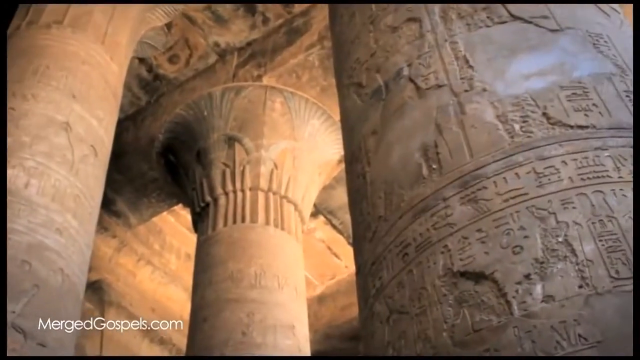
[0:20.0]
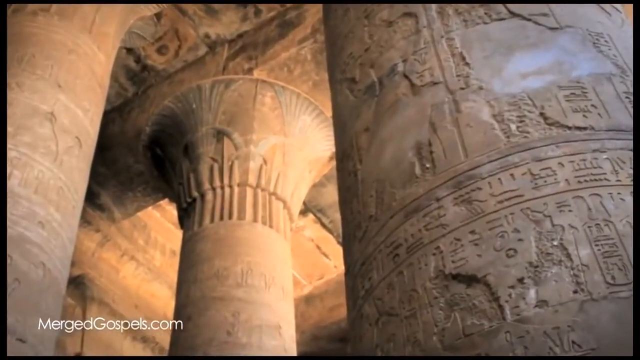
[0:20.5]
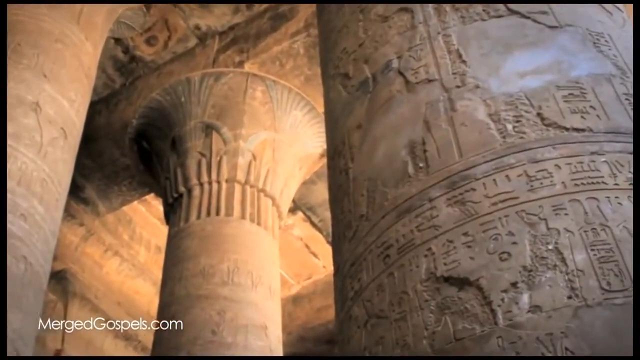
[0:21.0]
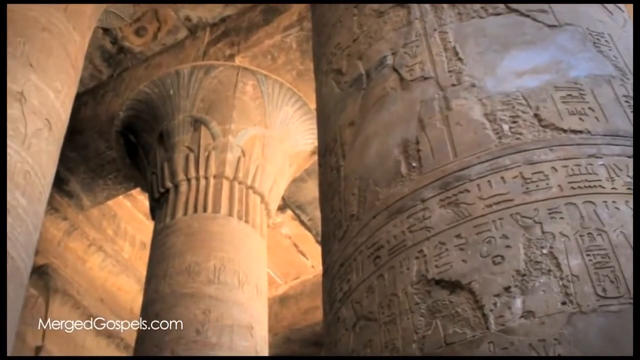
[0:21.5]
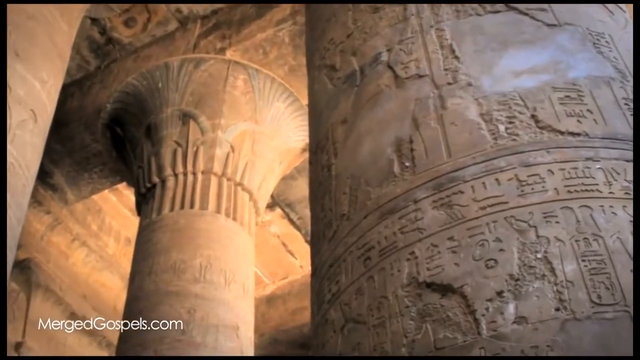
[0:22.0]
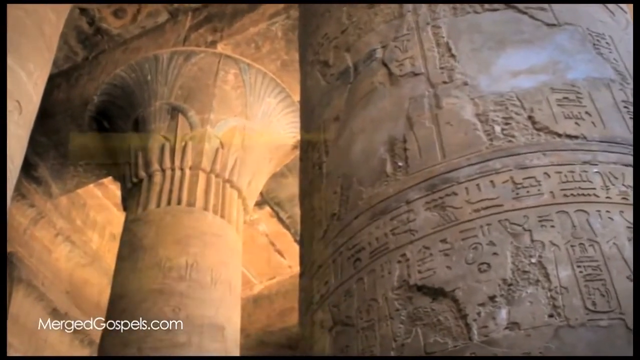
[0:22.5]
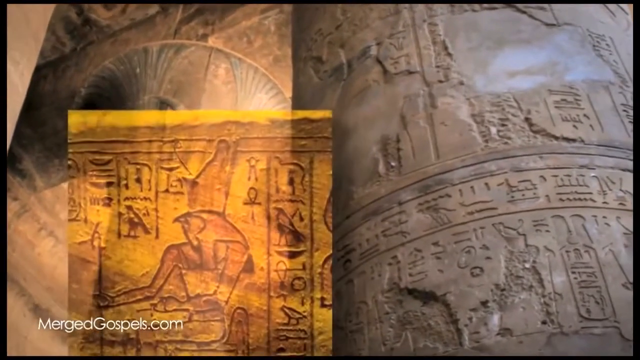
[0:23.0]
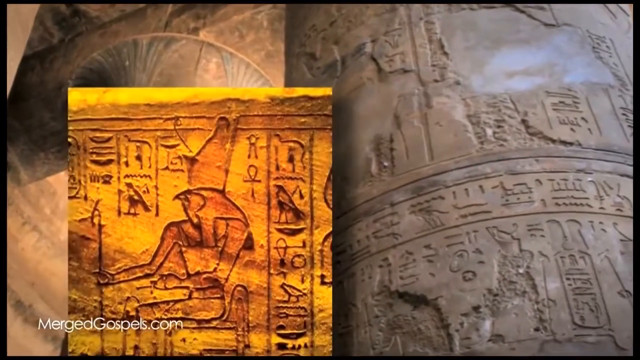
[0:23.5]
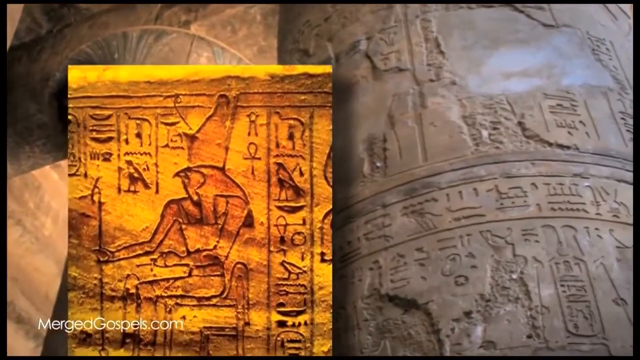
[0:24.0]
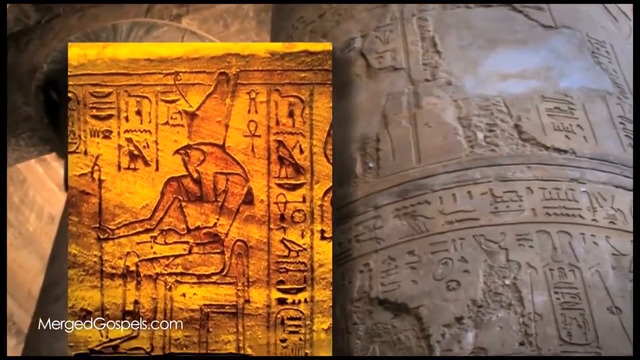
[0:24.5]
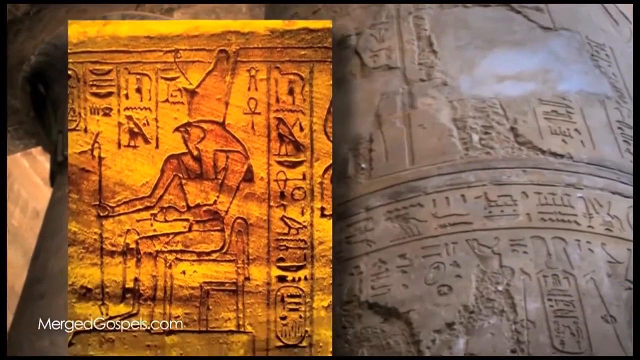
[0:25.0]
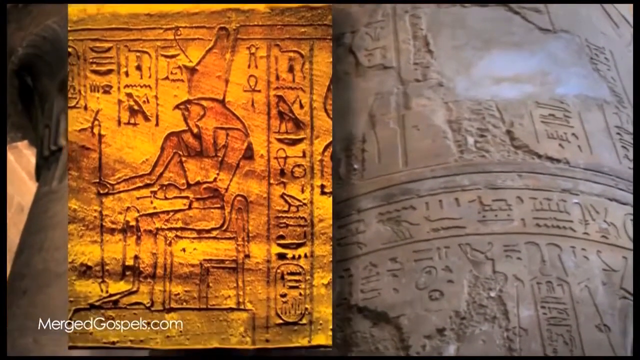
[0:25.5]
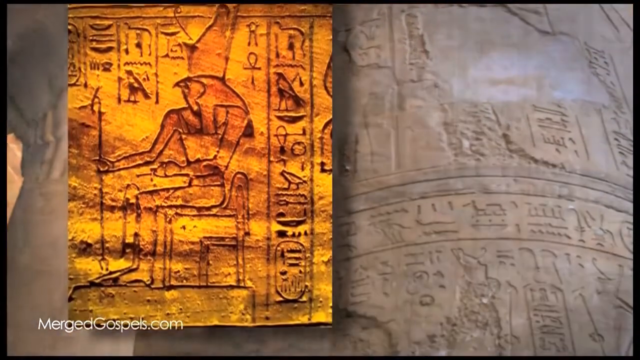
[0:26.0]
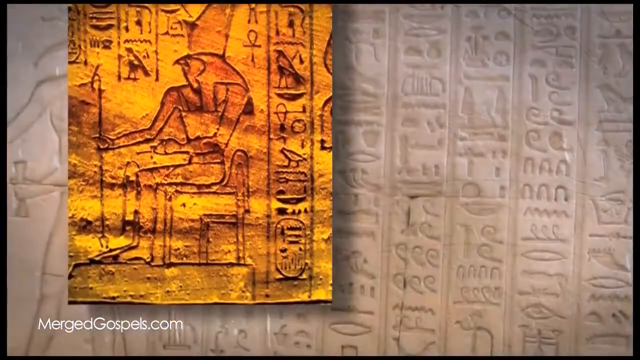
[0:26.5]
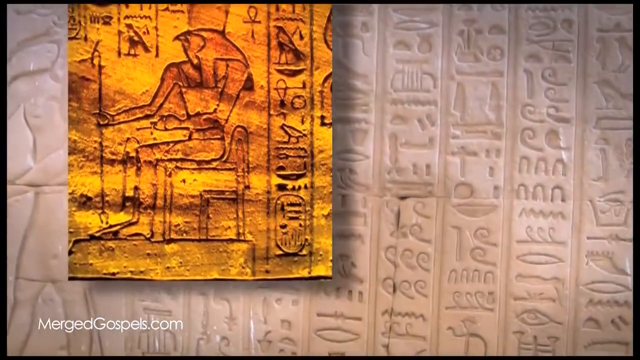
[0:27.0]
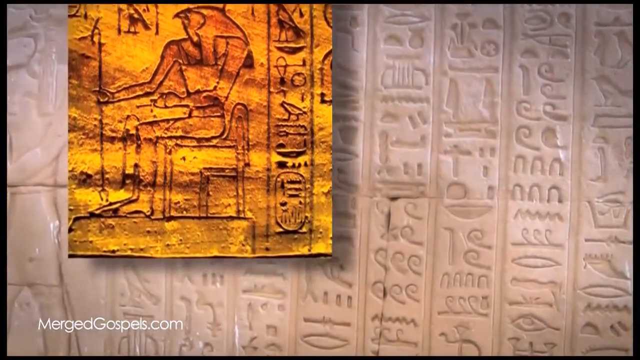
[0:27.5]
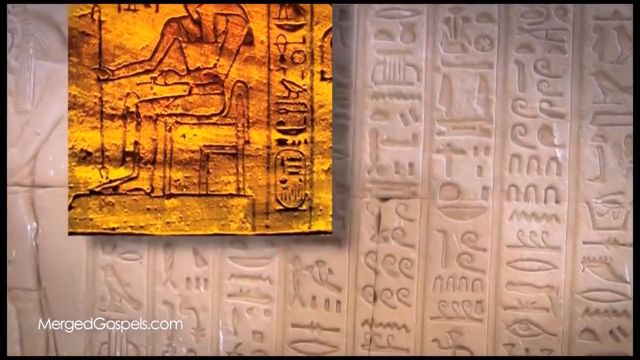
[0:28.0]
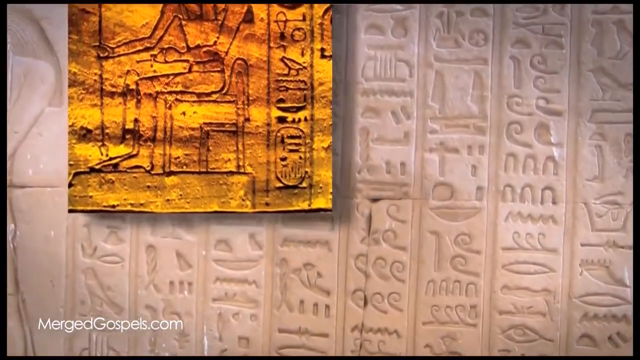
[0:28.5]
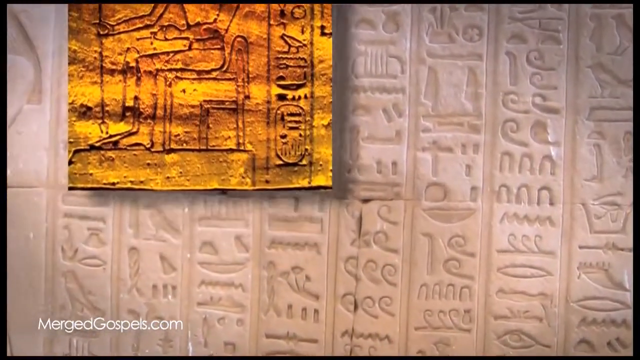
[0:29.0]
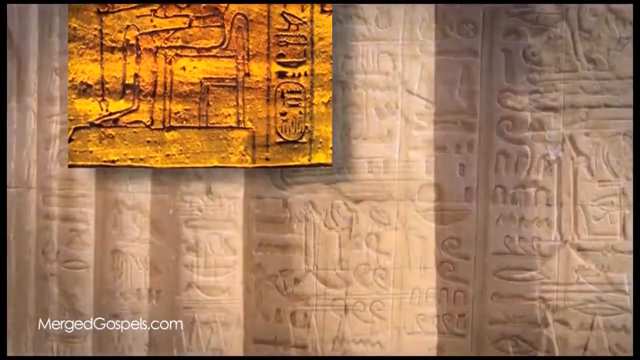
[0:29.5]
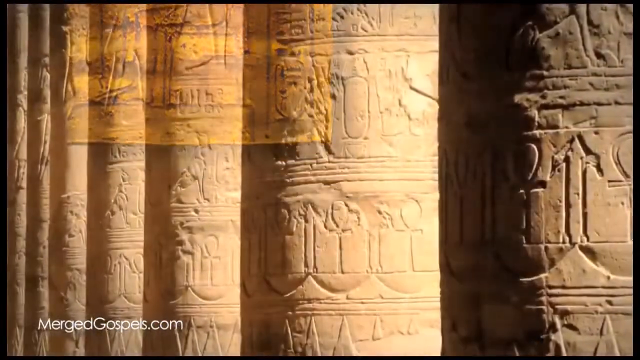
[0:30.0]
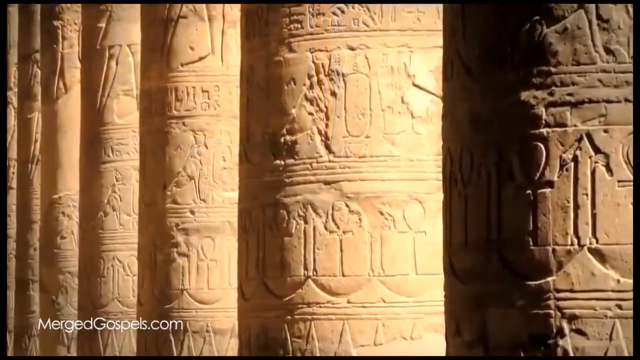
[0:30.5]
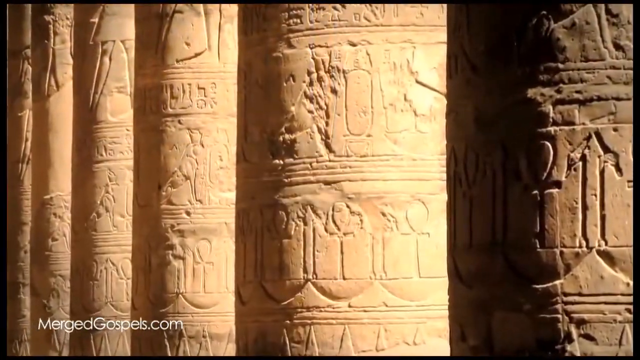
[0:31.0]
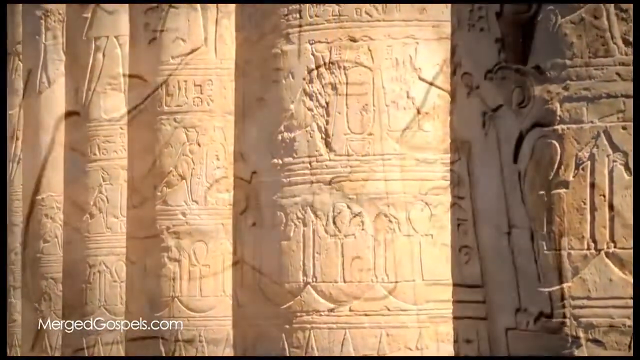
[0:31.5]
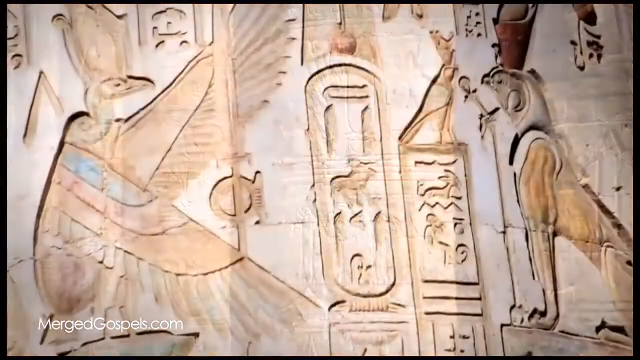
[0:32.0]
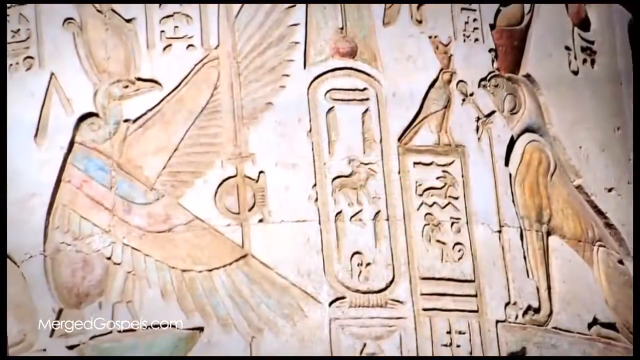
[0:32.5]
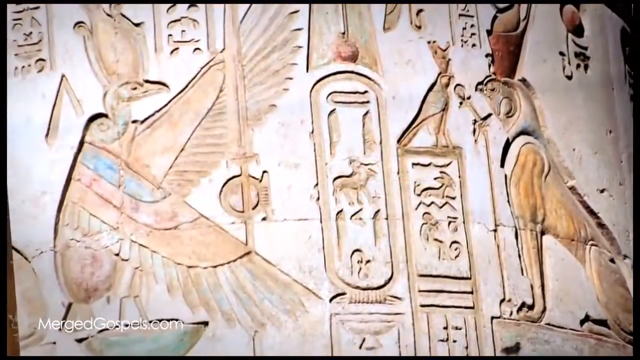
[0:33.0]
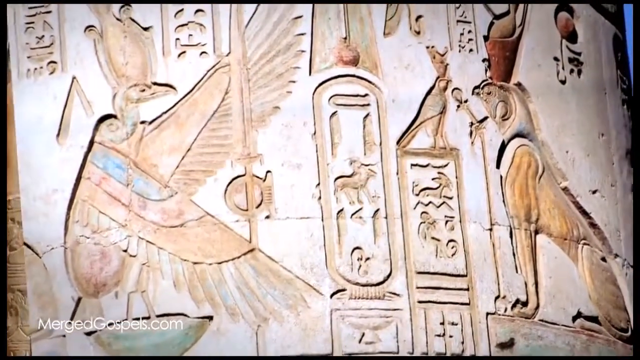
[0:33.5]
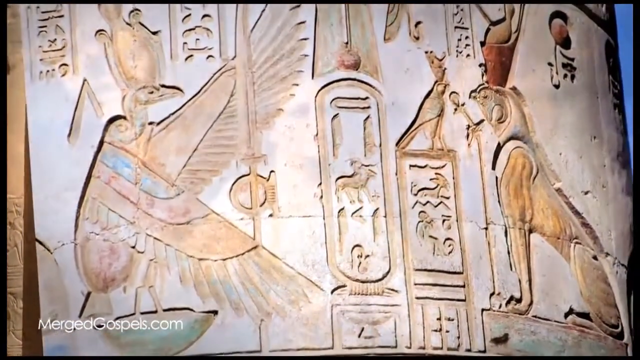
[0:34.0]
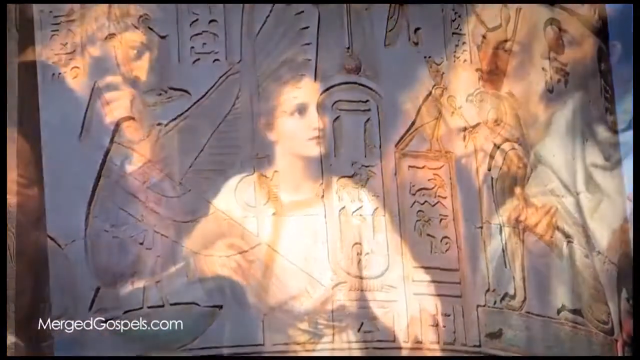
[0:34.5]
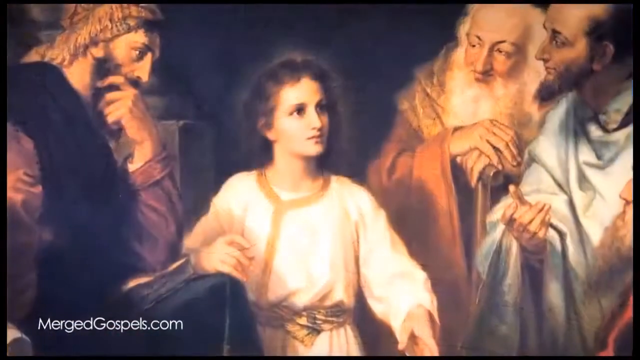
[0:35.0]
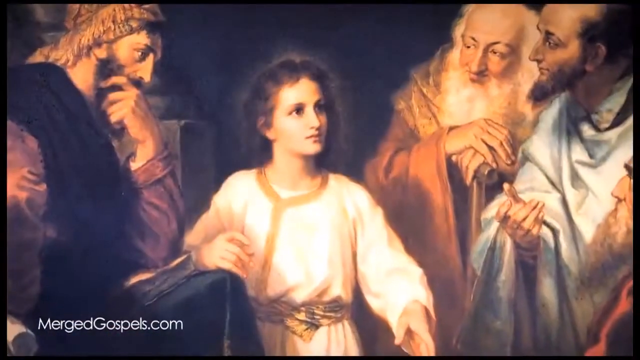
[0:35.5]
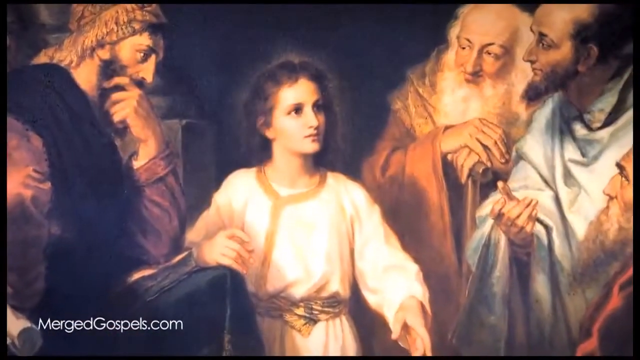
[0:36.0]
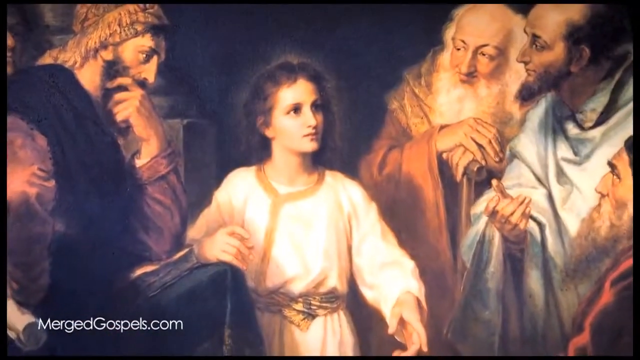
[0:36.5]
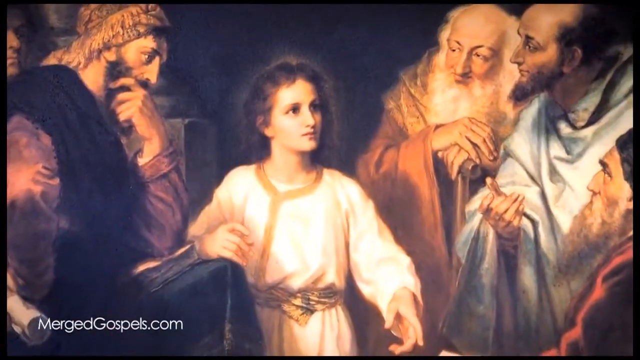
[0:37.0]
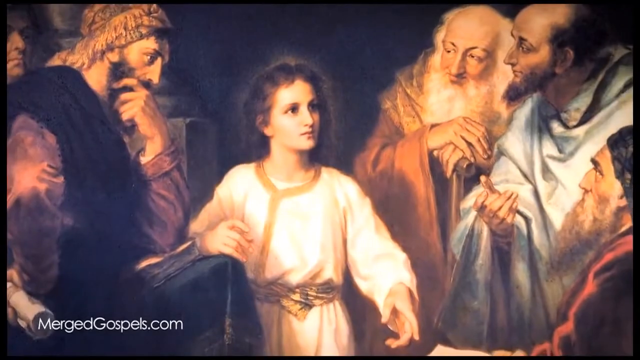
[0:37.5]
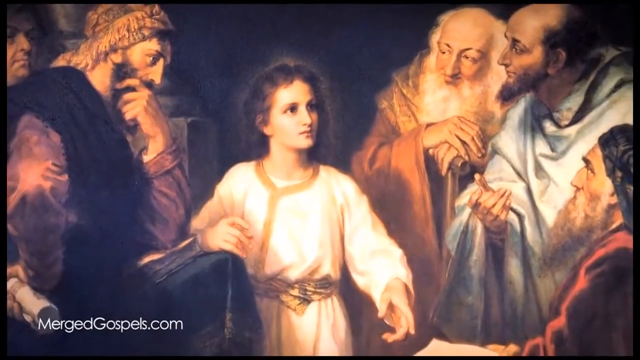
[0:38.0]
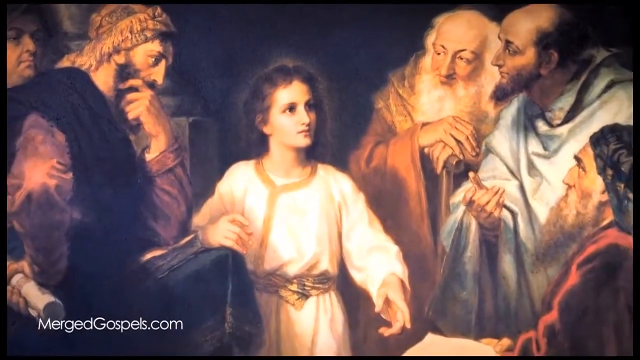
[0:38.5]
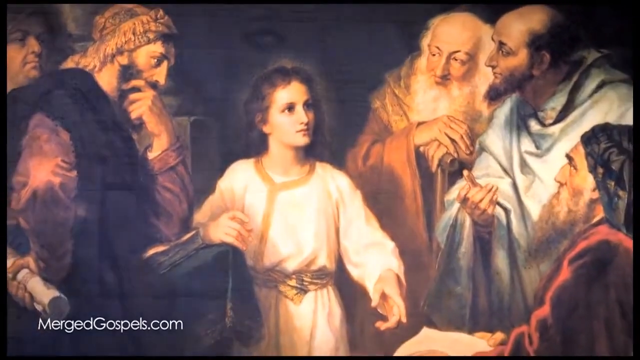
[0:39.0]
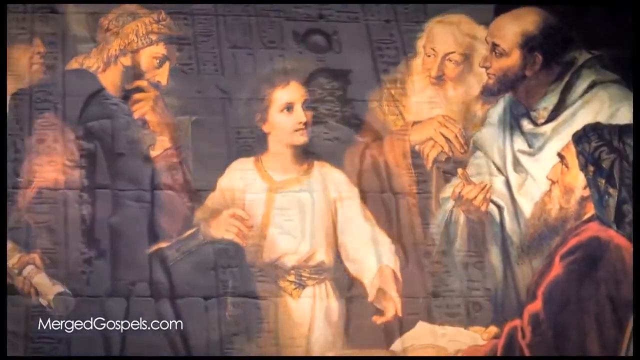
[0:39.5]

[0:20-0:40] A downward camera angle shows some of the columns in the Ancient Egyptian pyramids; the shot is taken from the bottom. Three columns and the detail on the roof are visible. On the left is a column that looks plain, in the middle is a column decorated at the top, and closest on the right is a column with extremely detailed hieroglyphics carved into it. The camera slowly moves in on the detailed column, rotating clockwise as it does. On the left of the image a yellow image appears, starting at the bottom and slowly rising to take up half of the screen; it shows the bird god in an engraving. The image in the back changes to show more hieroglyphics. This fades away and an image of levels of columns appears: seven columns in total, all extremely detailed with hieroglyphics, viewed so that the closest column is on the right and the furthest ones are on the left, with sunlight coming in from the right-hand side. The image then changes to show hieroglyphics of a bird on the left and a cat or dog of some kind on the right. Next comes an old Renaissance-style painting. The centre of the image appears to be Jesus as a young child, wearing all white and glowing in comparison to the other people, with gold ornamentation around his neck sewn into his outfit and long brown hair. His face is lit up, and he is looking off to the right-hand side of the image. On the left are two men: of the one furthest left only the face is visible, poking over the shoulder of the other man. The next man is sat with his side profile towards the viewer, one hand on his chin in a thinking position and the other on his hip, looking at the boy. To the right of Jesus is an old man, bald with a long beard and a brown cloak, with a walking stick; he has one hand on top of the walking stick and the other hand on top of that hand, and he is leaning in, looking towards the boy to his left. Next to him is another man in side profile, facing left towards the boy; he has a beard and is bald, and holds one hand in the air with the palm facing him and fingers spread out, almost in a questioning manner. Furthest right is a man sat down, of whom only the chest and head are visible, seen in side profile looking towards the boy, with a large beard and a forehead of brown hair.